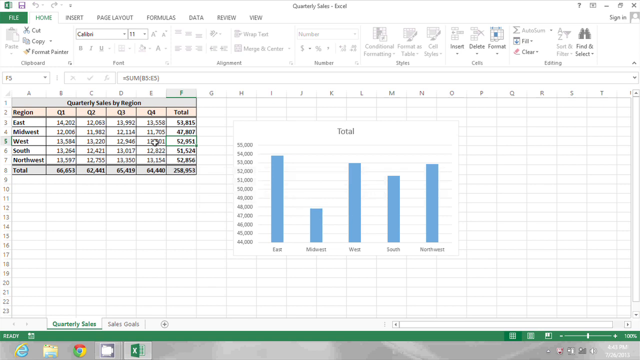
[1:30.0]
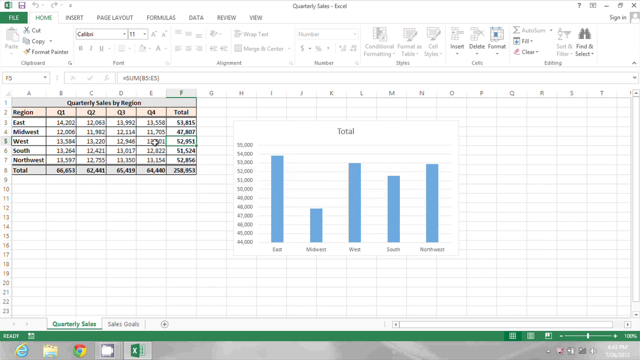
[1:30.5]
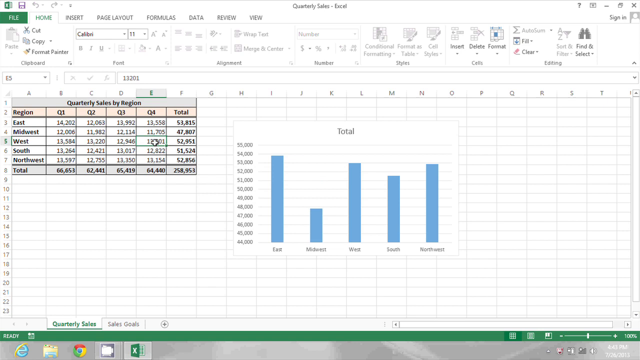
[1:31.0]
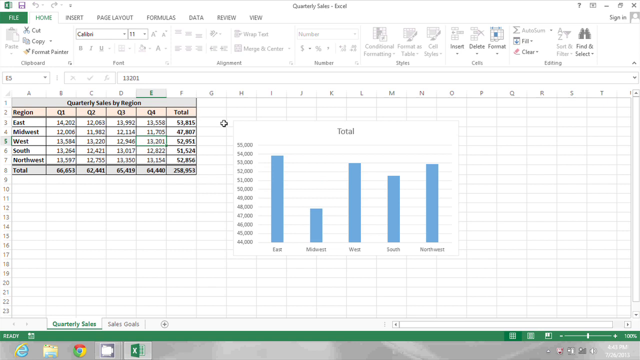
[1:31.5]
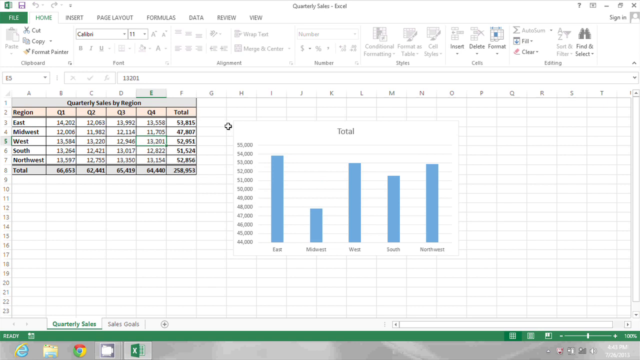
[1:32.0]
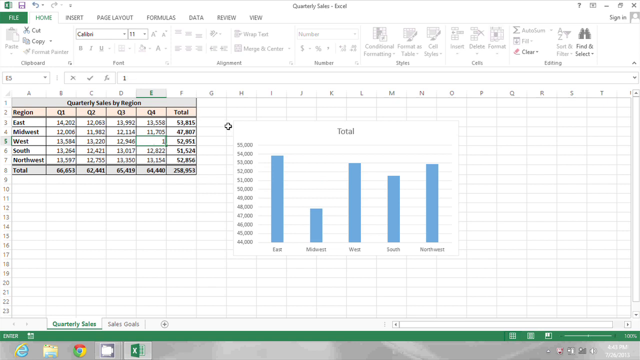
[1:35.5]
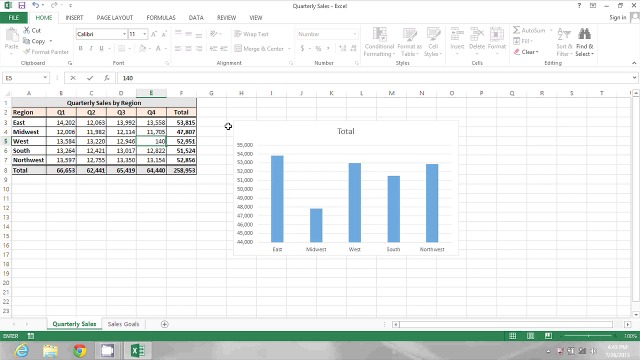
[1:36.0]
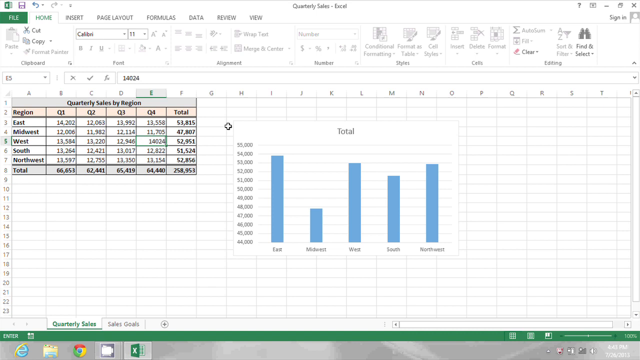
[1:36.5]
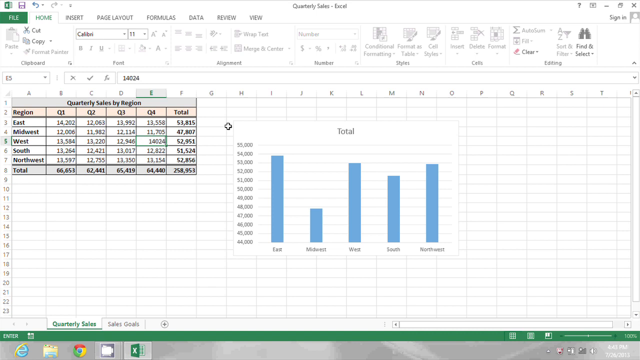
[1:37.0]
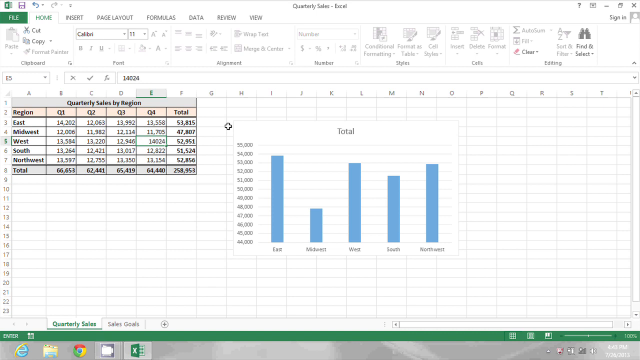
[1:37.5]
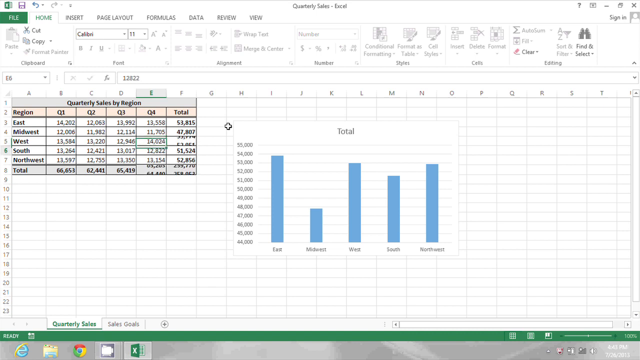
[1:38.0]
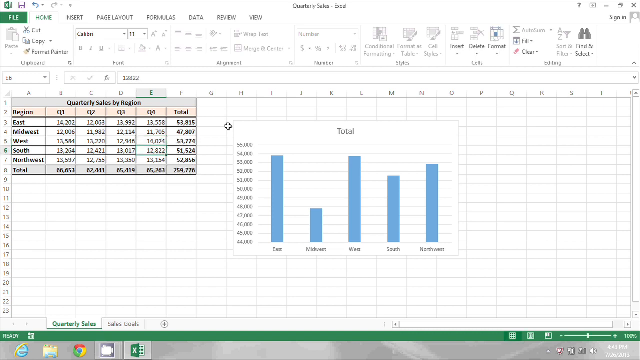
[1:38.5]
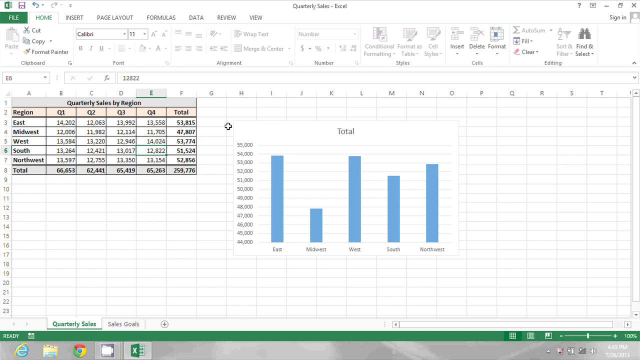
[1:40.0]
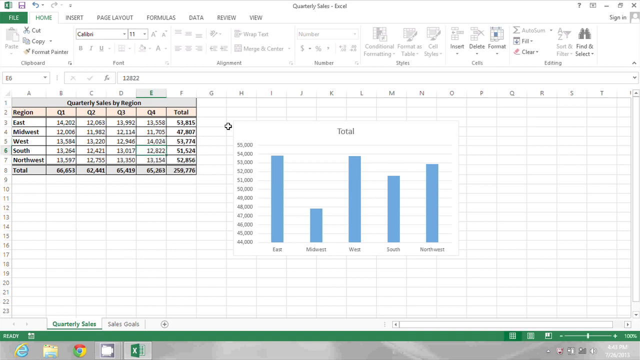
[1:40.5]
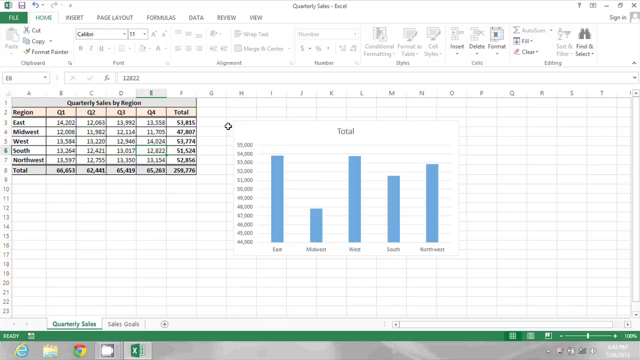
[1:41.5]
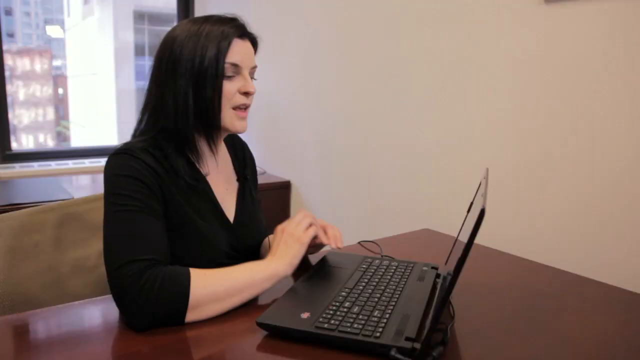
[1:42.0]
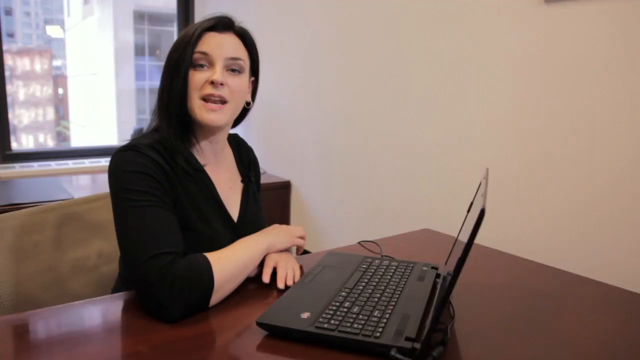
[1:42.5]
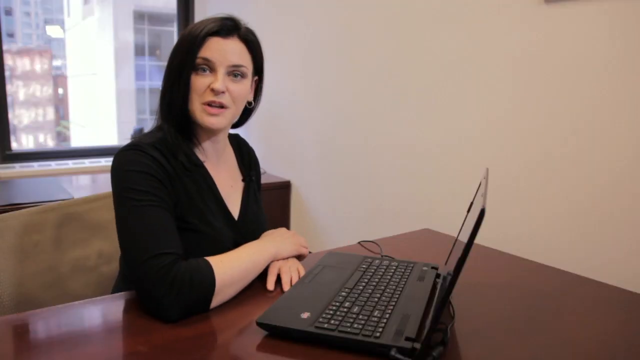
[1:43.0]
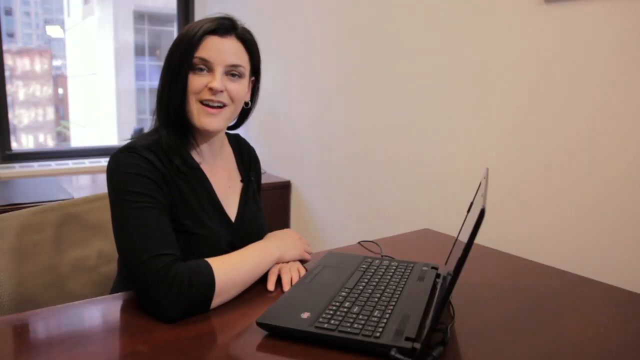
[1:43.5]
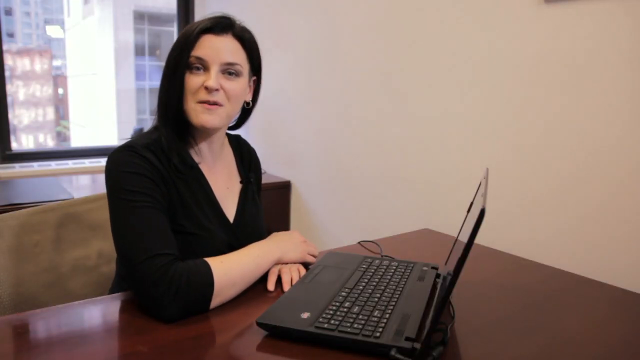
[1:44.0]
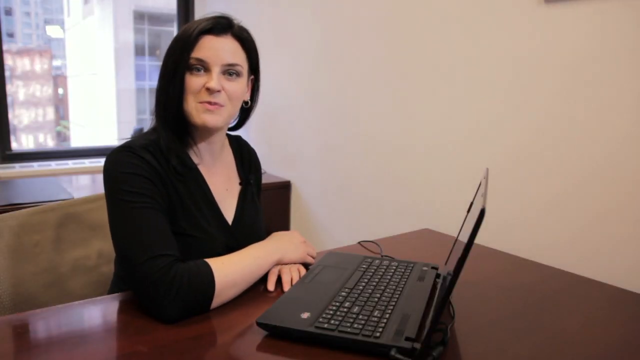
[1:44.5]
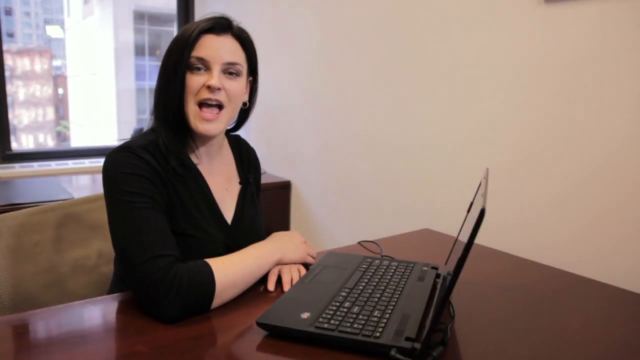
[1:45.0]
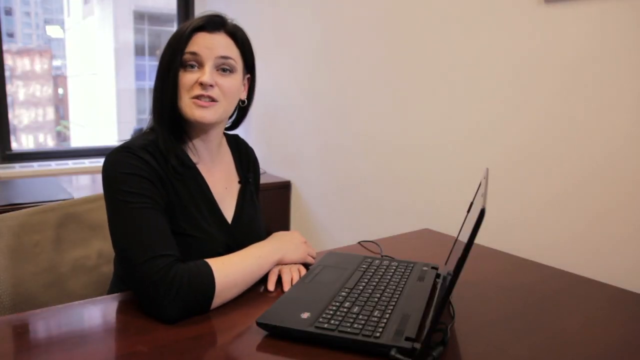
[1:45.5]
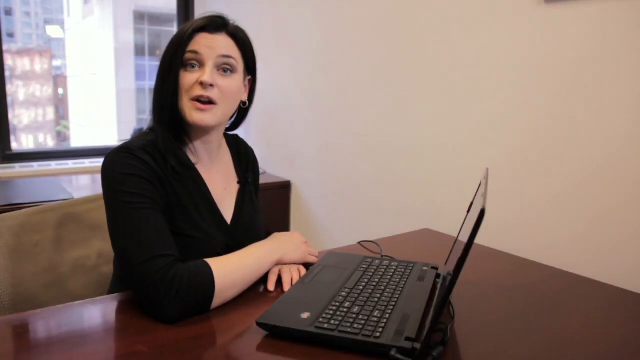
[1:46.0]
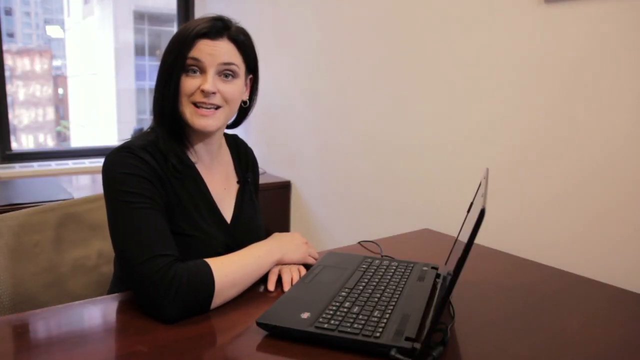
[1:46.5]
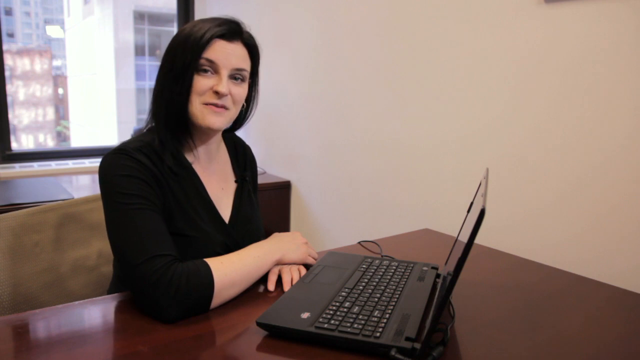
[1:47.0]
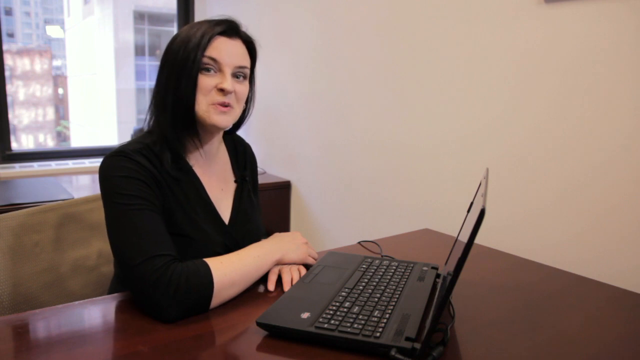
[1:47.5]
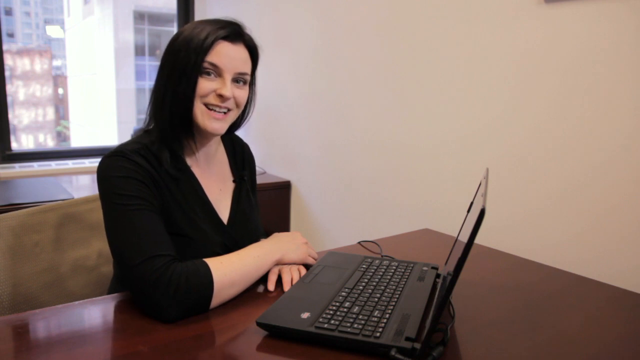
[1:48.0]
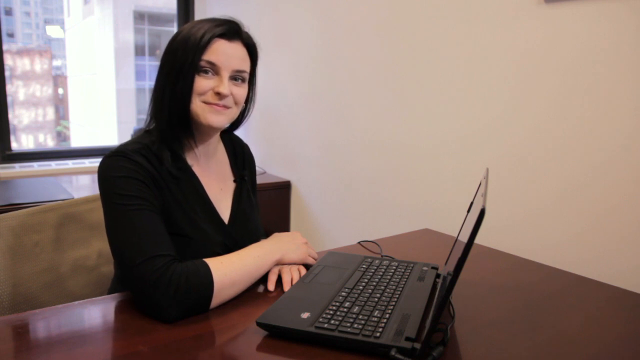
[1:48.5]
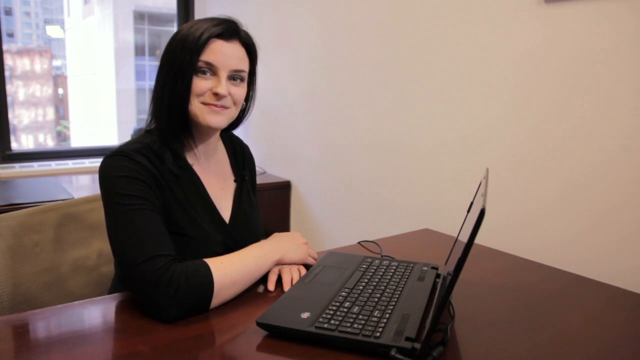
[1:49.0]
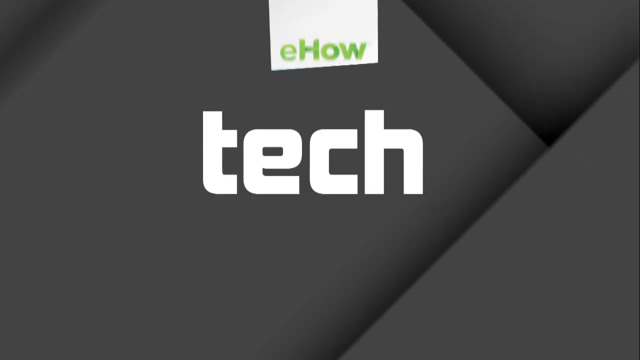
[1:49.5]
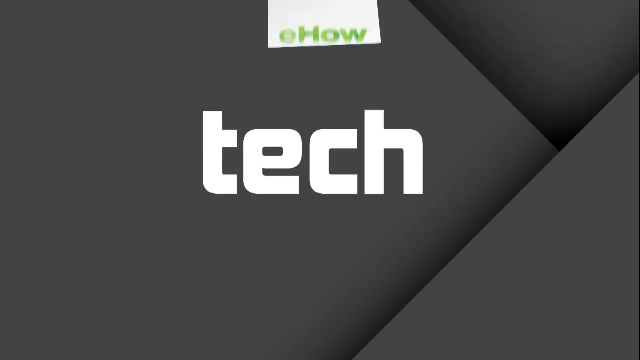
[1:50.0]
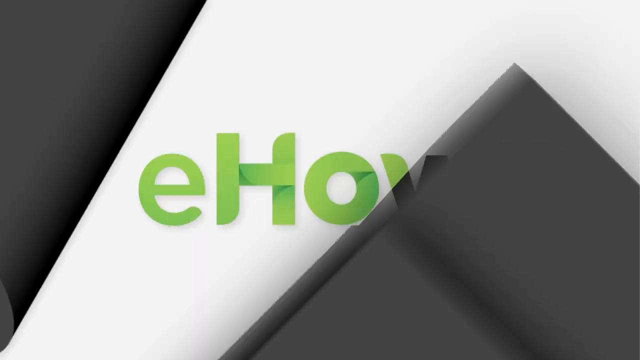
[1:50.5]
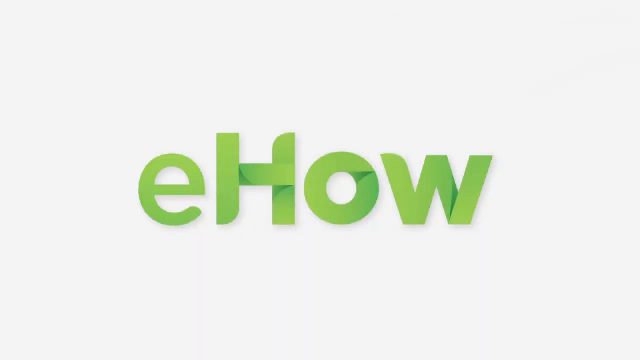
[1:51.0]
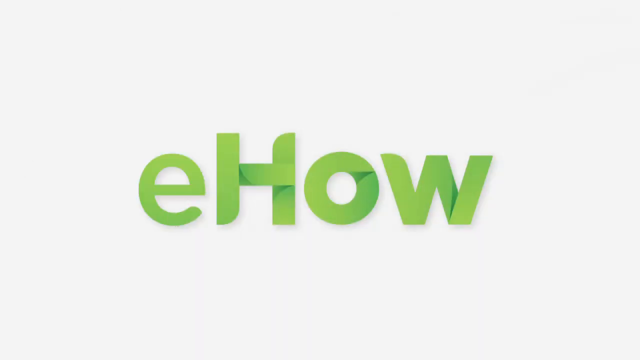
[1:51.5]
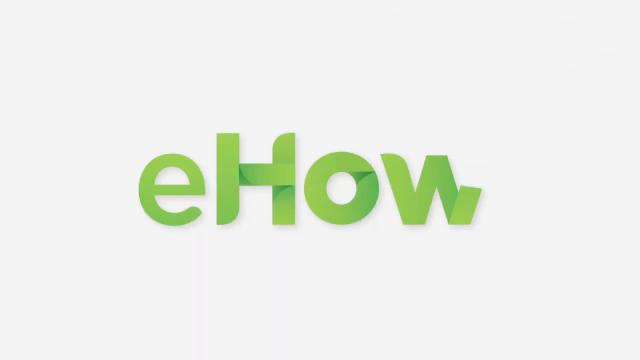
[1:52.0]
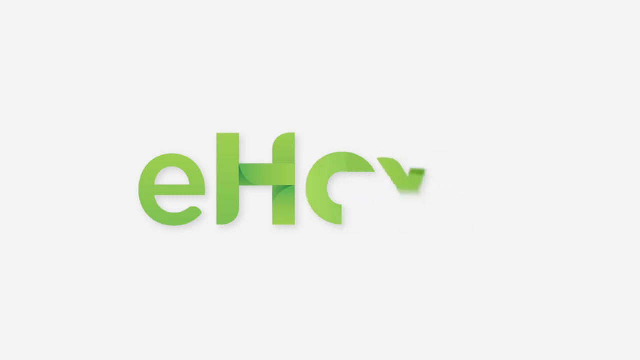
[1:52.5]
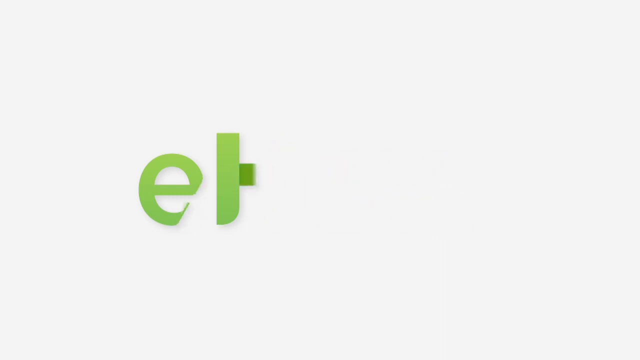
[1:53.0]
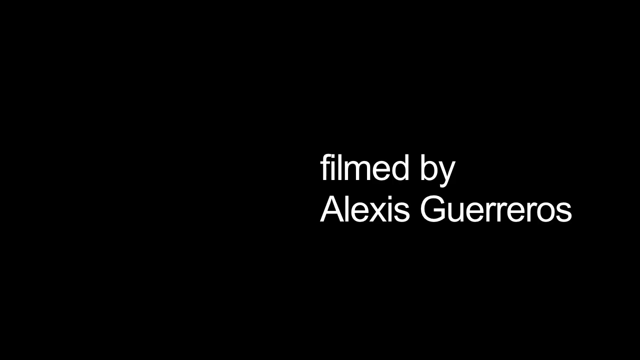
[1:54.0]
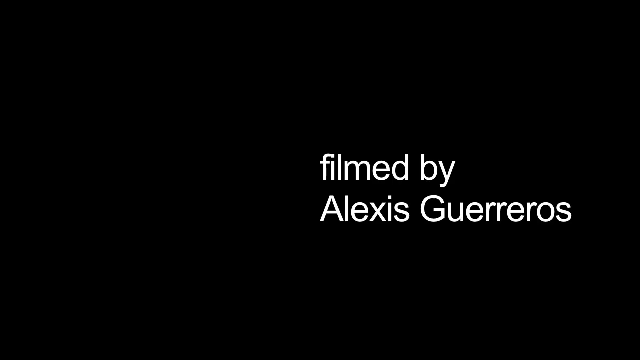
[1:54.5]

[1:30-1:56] The Excel page is shown with everything on screen, and the mouse has been moved slightly off the chart. The user retypes the West quarter 4 amount from 13,201 to 14,024 and enters it, which changes the graphs and the chart totals within the Excel document. The screen then switches back to the woman speaking, looking at the camera and talking with the laptop in front of her, her head turned slightly toward the camera and a smile on her face. A gray transition comes over the camera with the word "tech", and the eHow logo in a small white box comes up above the word "tech" and sits there before going back up. The gray disappears and the eHow logo appears in front of a white screen, filling up the entire screen. The logo disappears, the screen fades to black, and white text reads "filmed by Alexis Guerreros".